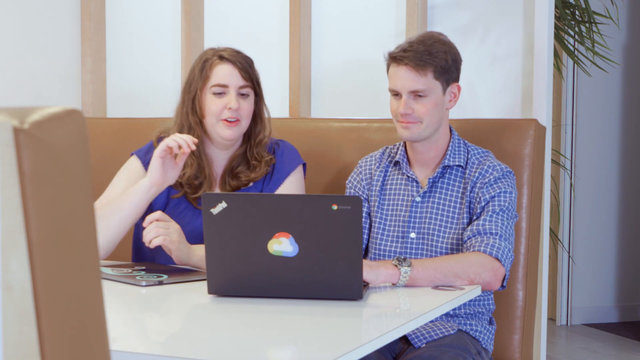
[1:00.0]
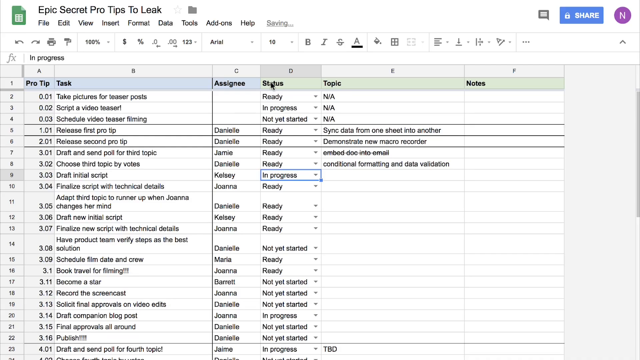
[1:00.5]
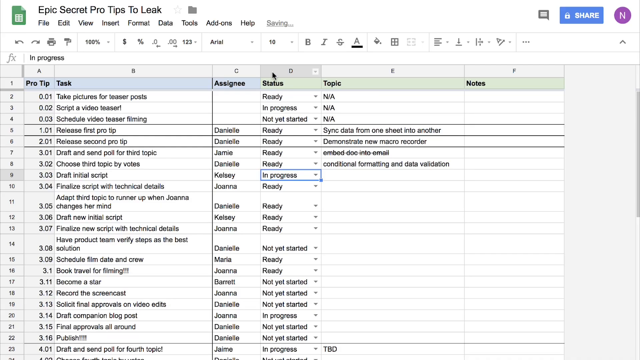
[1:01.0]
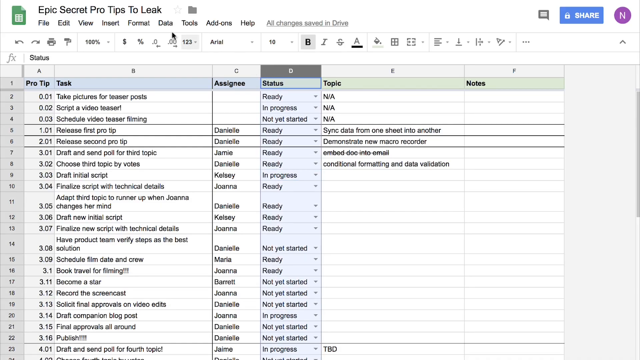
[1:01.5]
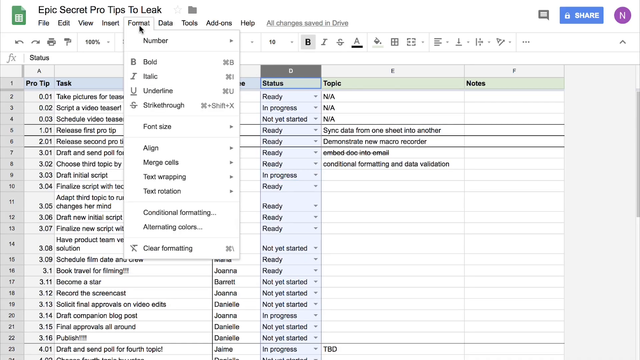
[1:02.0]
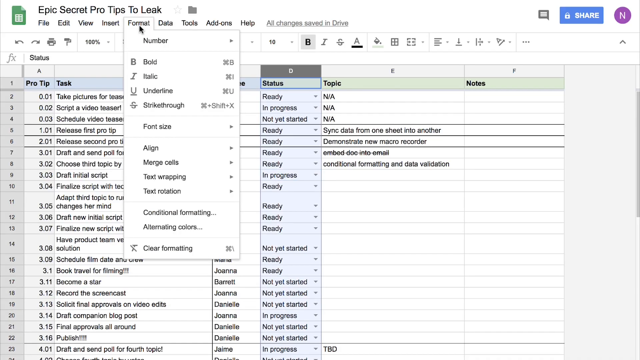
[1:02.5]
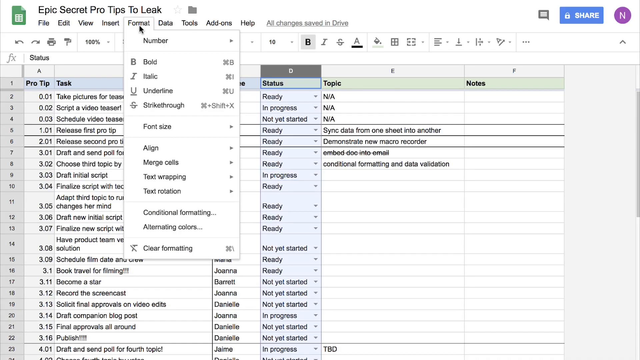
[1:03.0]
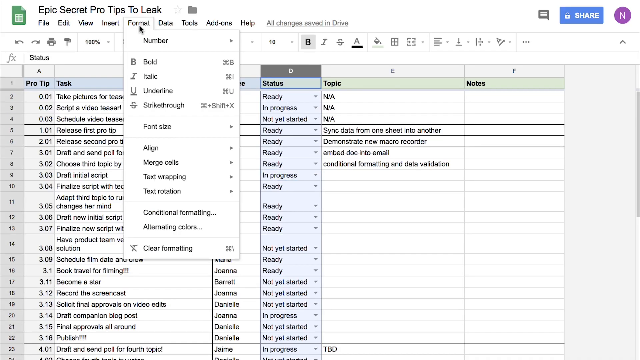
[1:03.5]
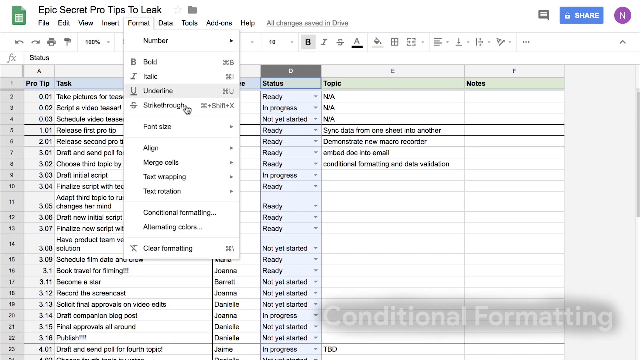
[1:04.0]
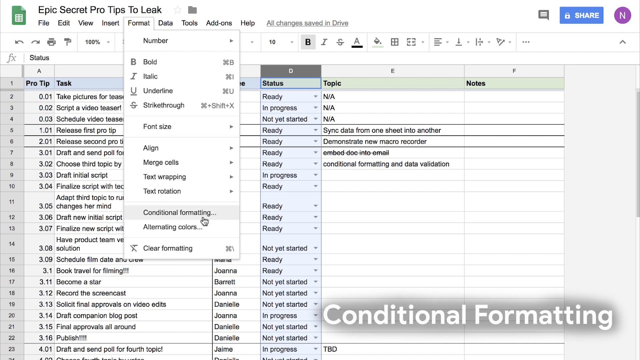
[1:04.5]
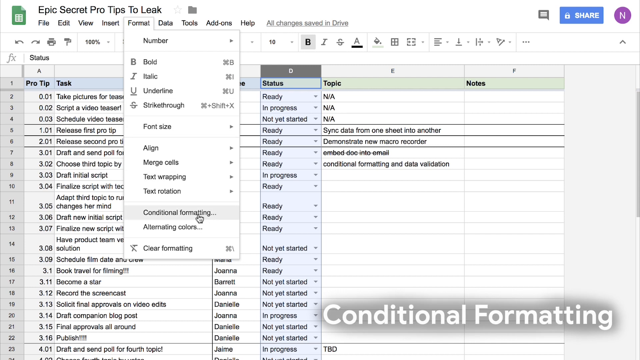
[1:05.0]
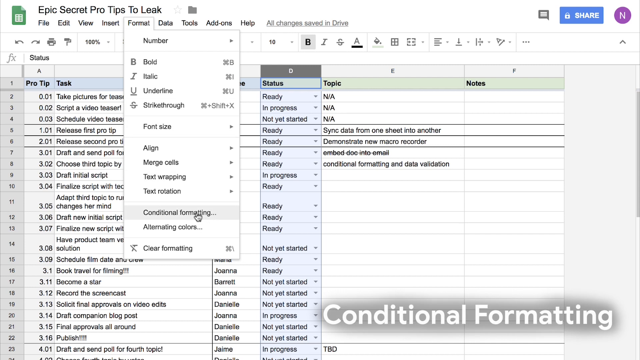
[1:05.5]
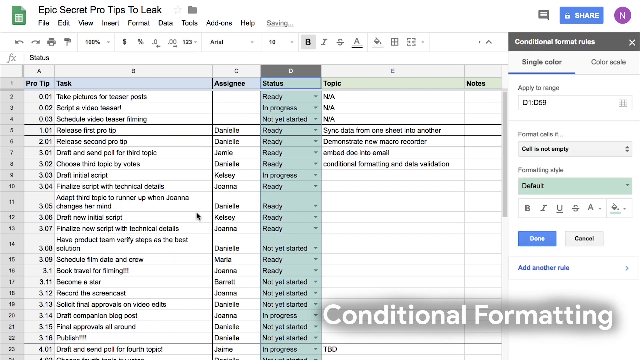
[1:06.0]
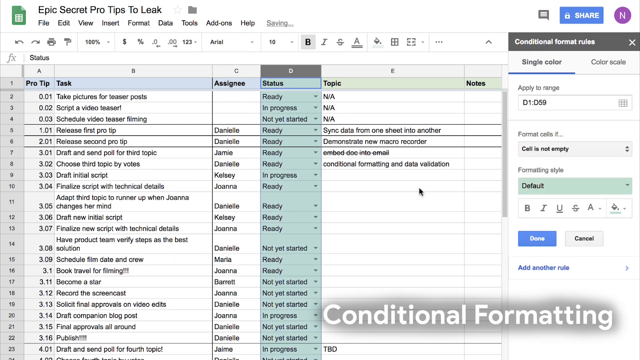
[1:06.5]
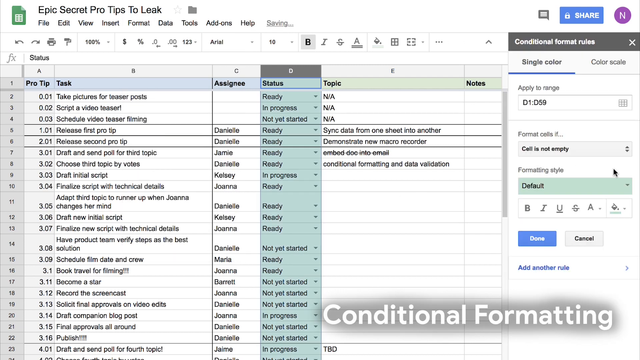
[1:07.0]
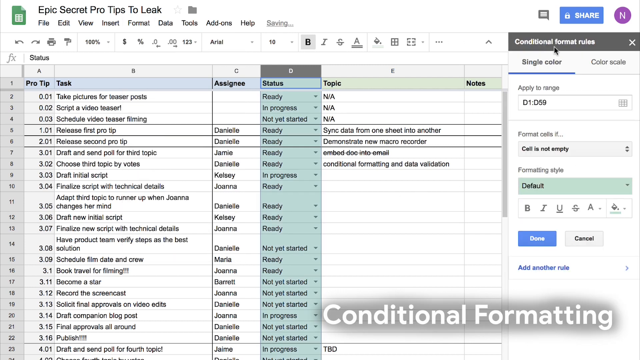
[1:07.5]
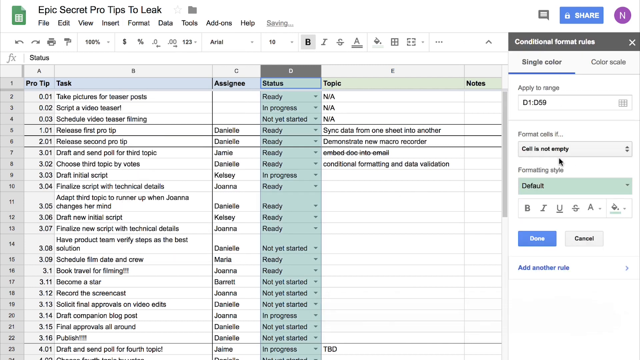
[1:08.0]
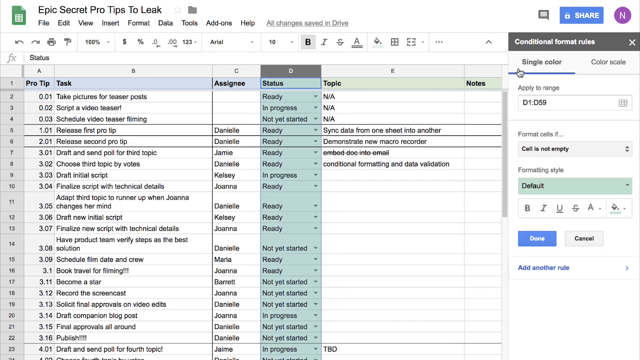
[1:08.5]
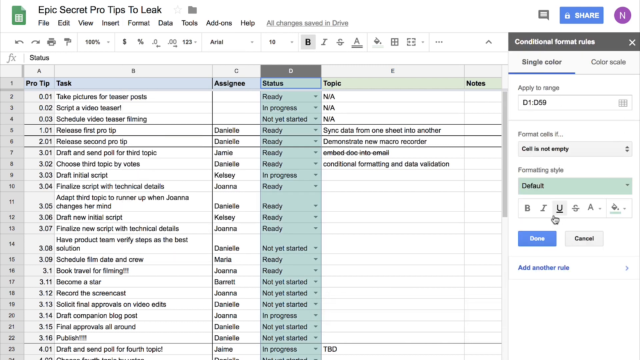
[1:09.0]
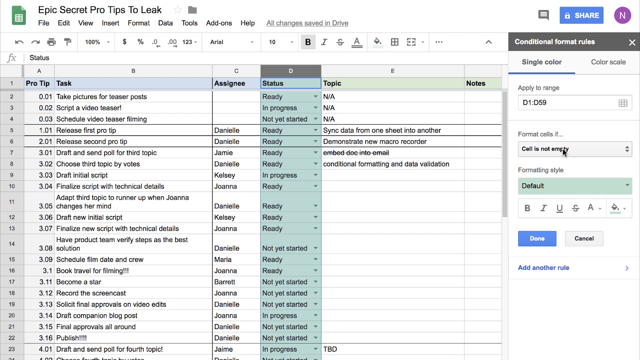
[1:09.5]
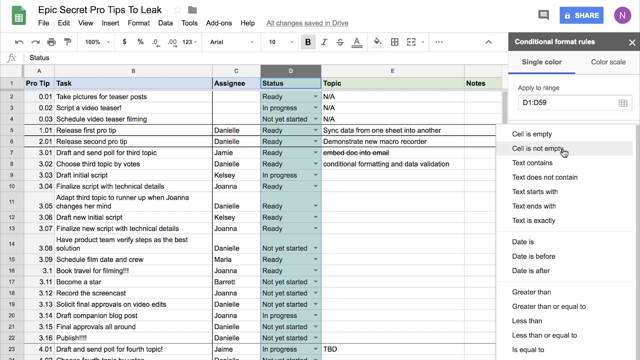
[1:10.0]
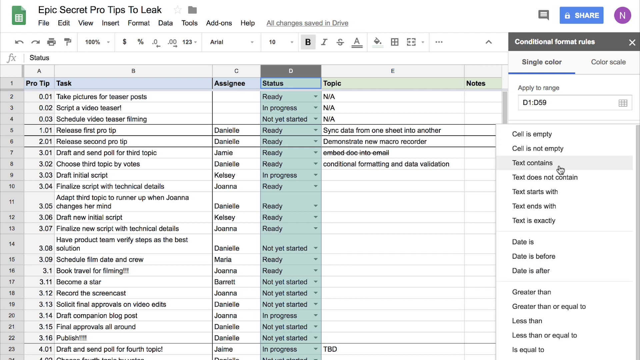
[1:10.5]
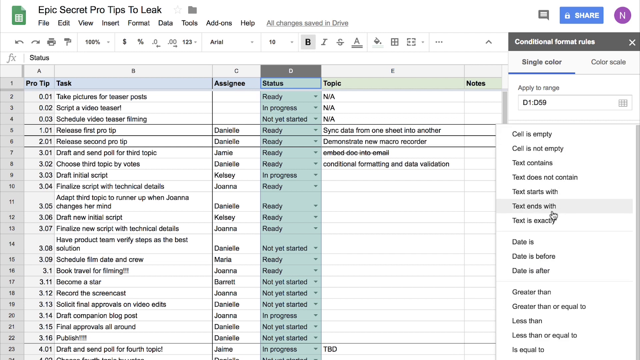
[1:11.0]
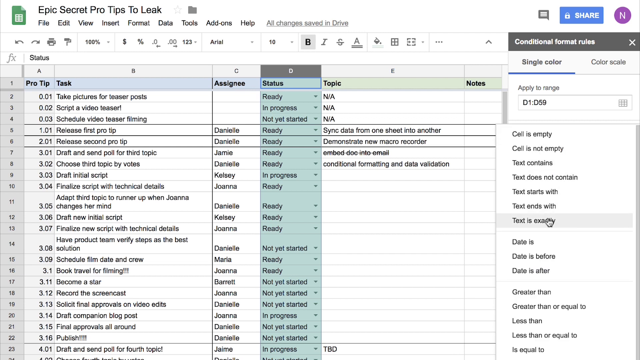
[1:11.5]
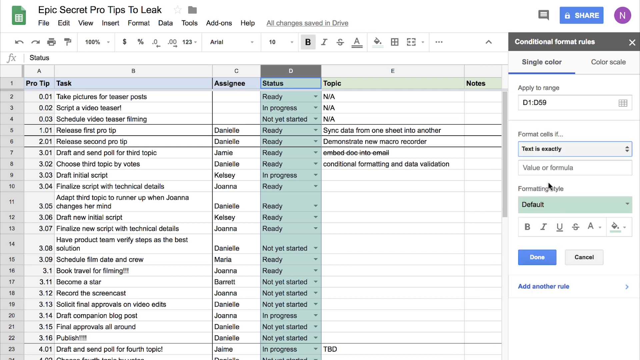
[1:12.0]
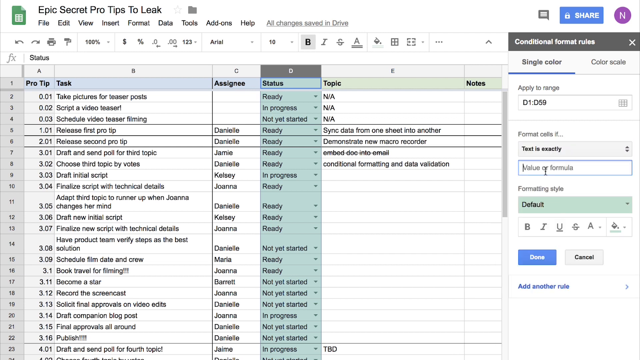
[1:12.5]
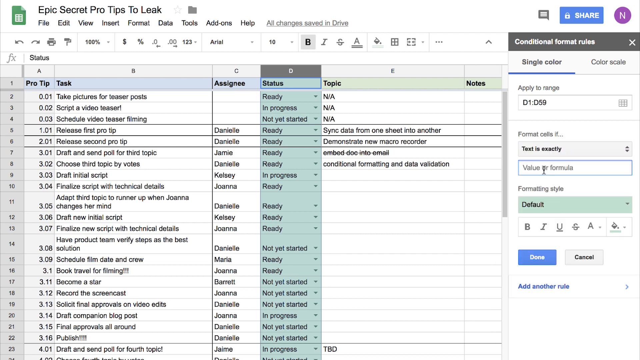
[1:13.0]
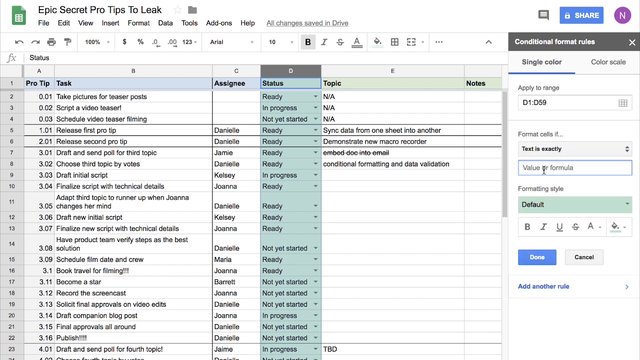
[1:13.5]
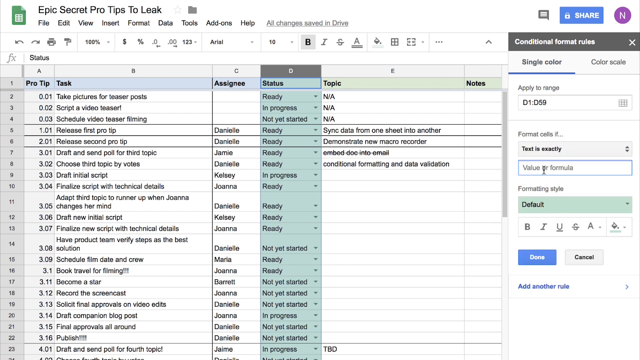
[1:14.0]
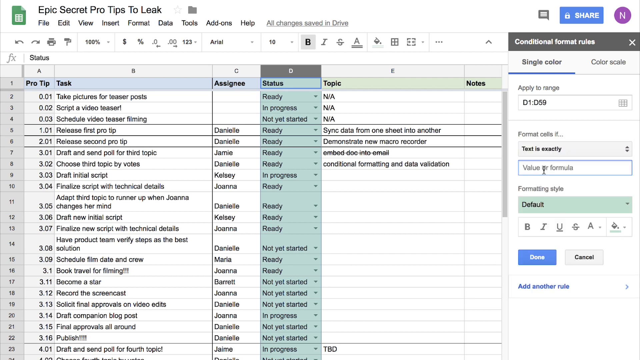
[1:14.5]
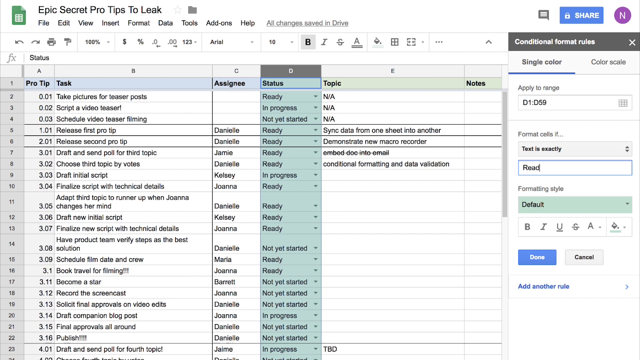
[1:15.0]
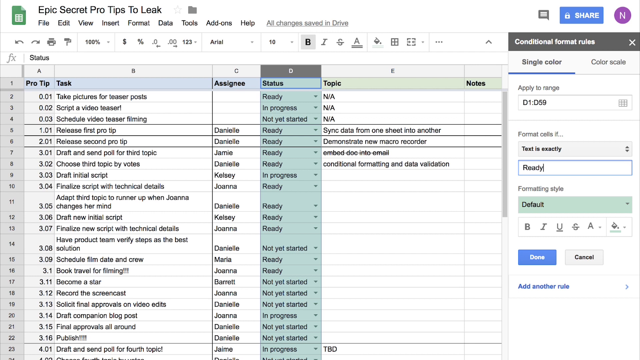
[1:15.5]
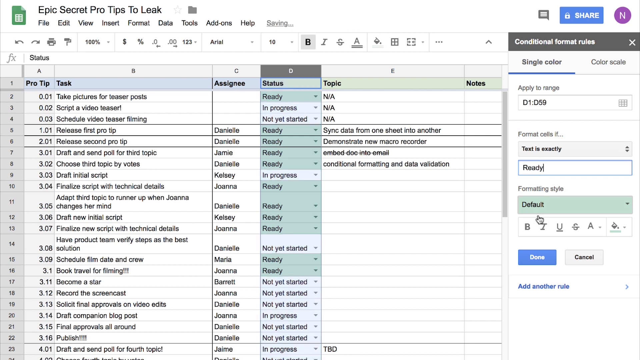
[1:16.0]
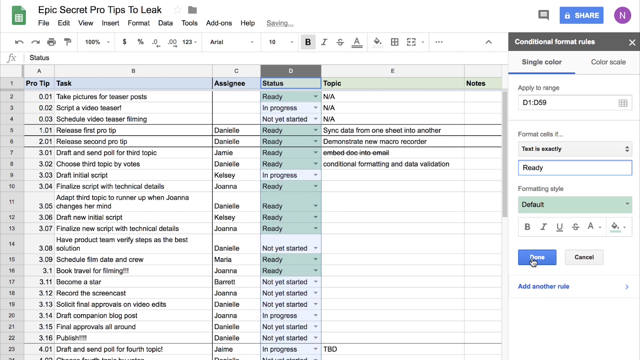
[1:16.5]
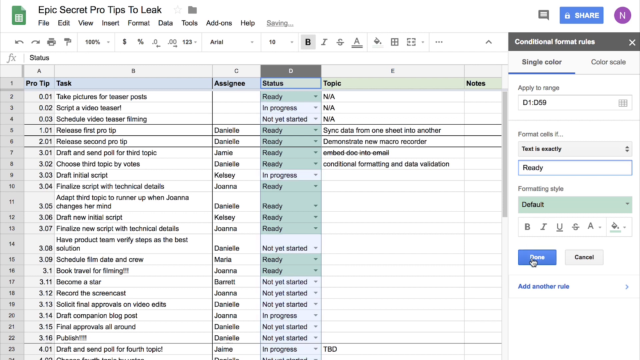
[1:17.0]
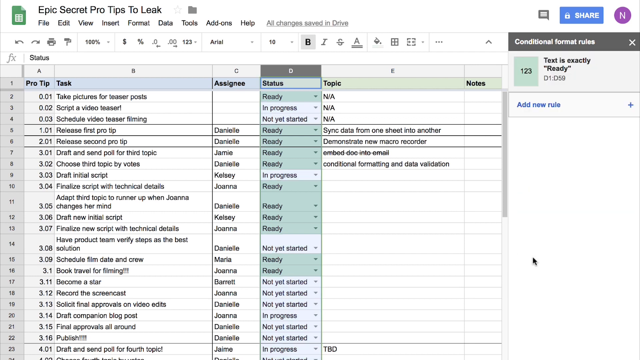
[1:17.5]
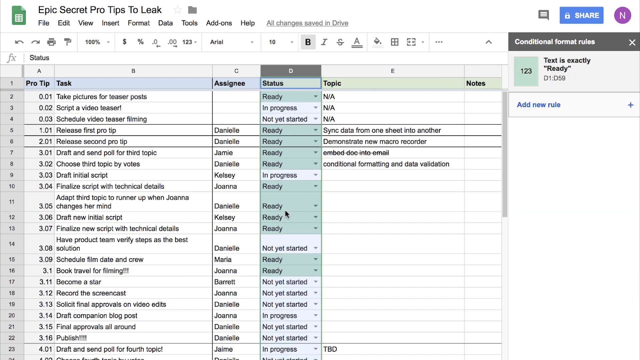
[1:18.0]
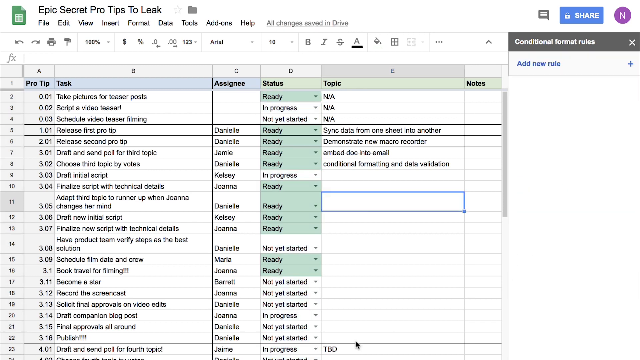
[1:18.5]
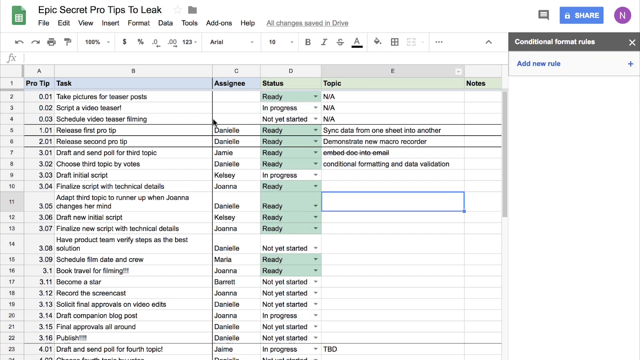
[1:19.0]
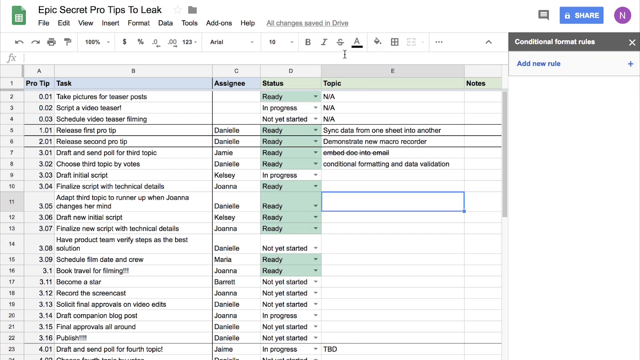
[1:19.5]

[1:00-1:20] The laptop screen shows a document with many things written on it. Under pro tip task are entries such as "taking pictures of the video, script a video, send them, choose third topic". The mouse clicks on conditional formatting, which shows items such as "sync data" and "demo new macro reorder". Some items are ready, some are not yet ready, and some are not applicable. There are columns for notes, for the person assigned to a task, for status showing whether an item is ready, and for the topic. At the far end of the screen appear "conditional format rules" and "add new rules".